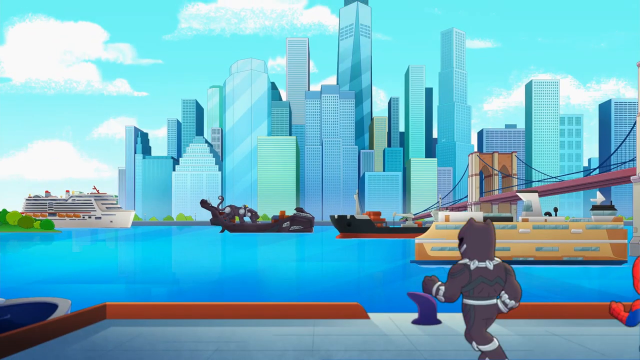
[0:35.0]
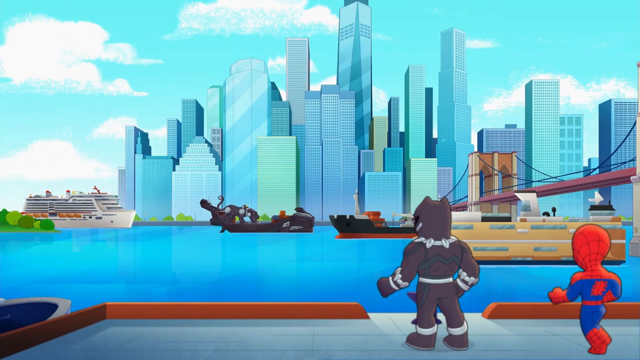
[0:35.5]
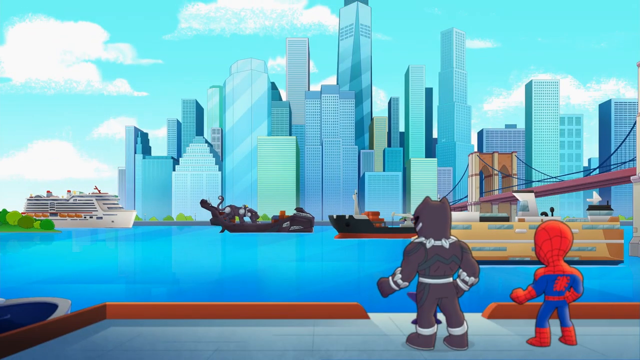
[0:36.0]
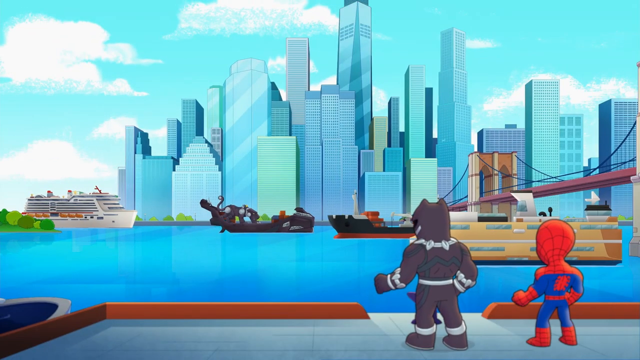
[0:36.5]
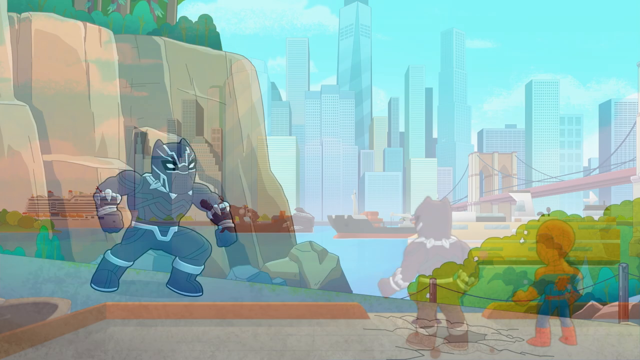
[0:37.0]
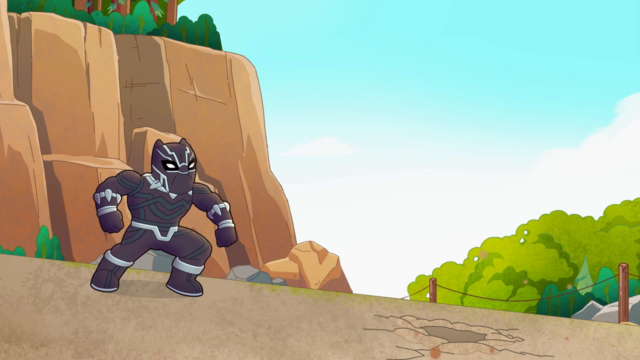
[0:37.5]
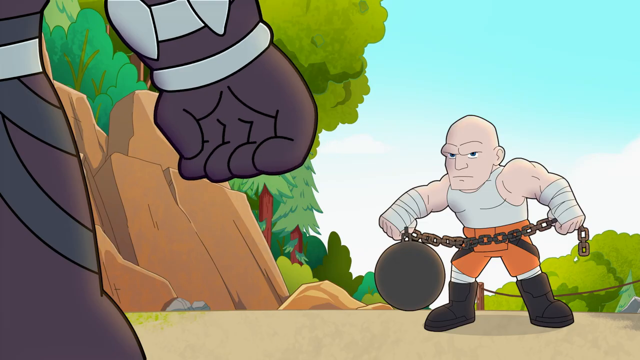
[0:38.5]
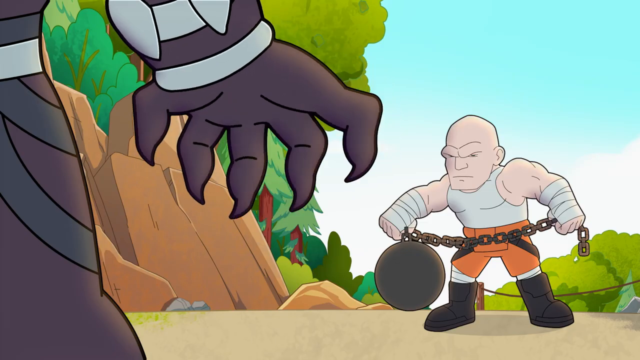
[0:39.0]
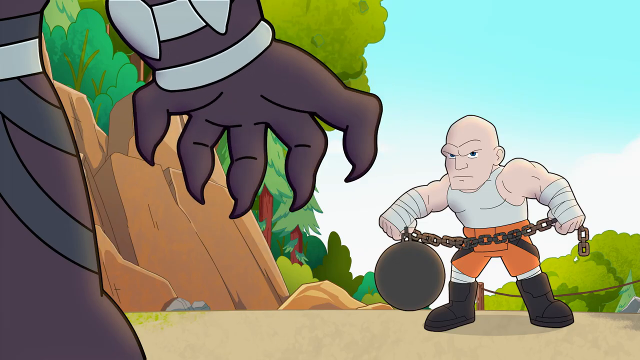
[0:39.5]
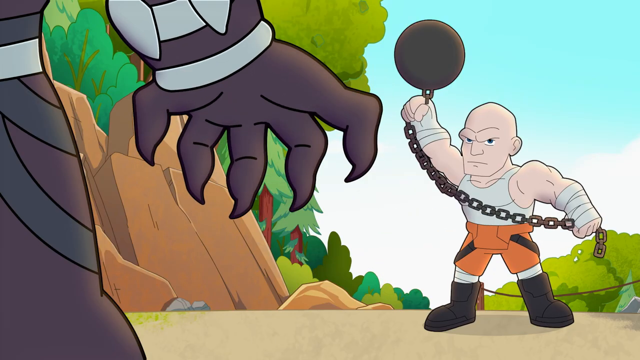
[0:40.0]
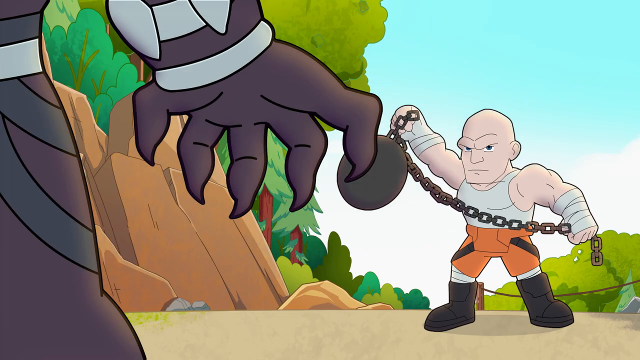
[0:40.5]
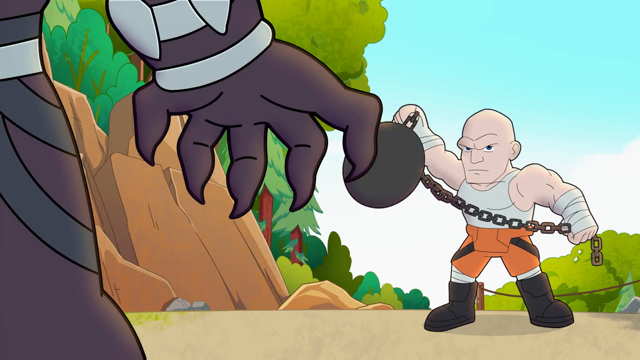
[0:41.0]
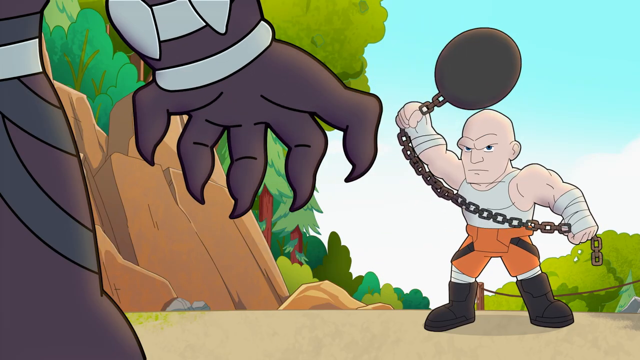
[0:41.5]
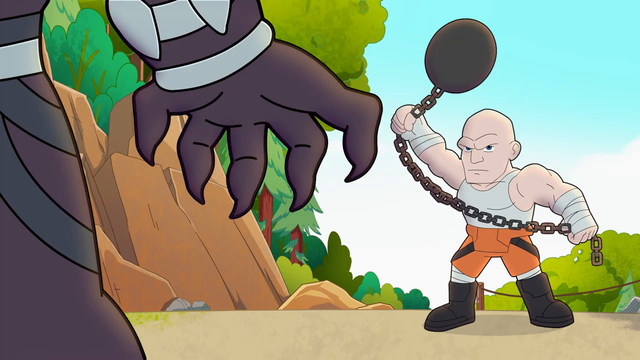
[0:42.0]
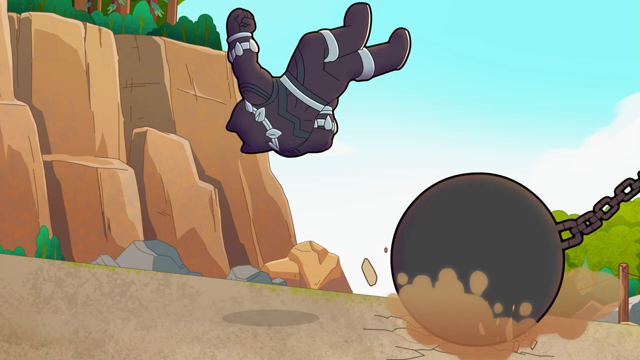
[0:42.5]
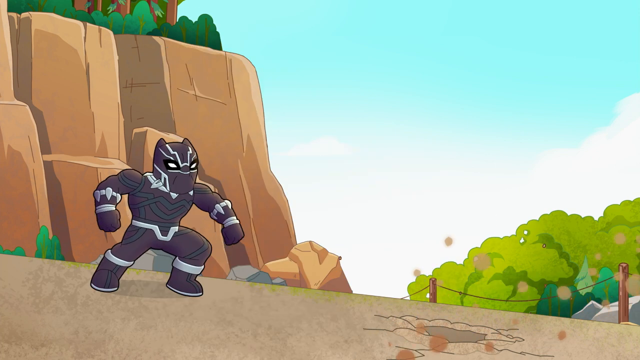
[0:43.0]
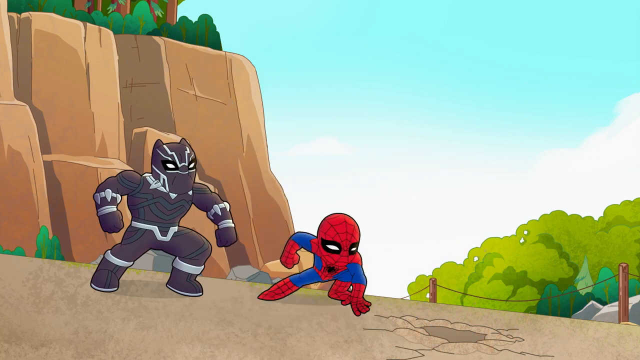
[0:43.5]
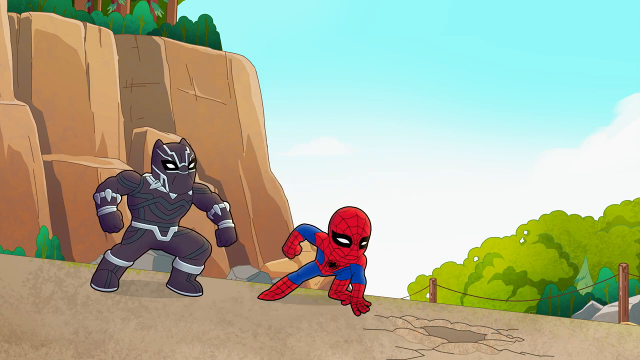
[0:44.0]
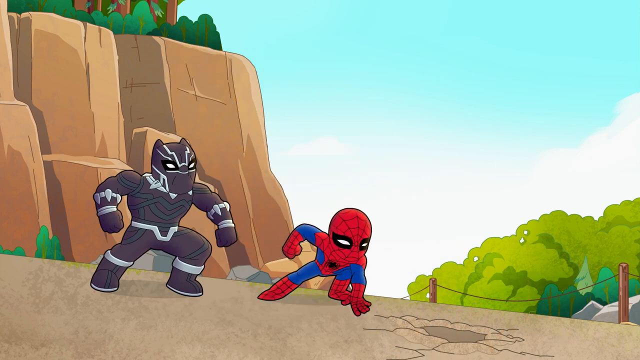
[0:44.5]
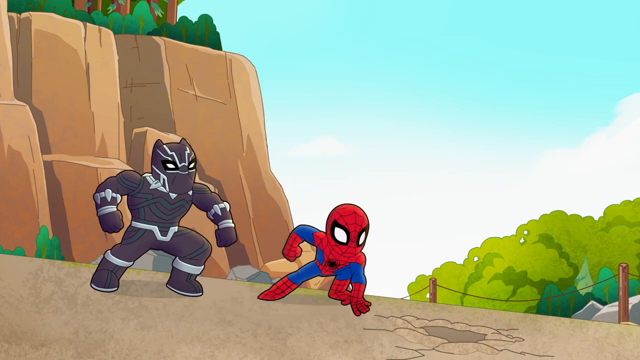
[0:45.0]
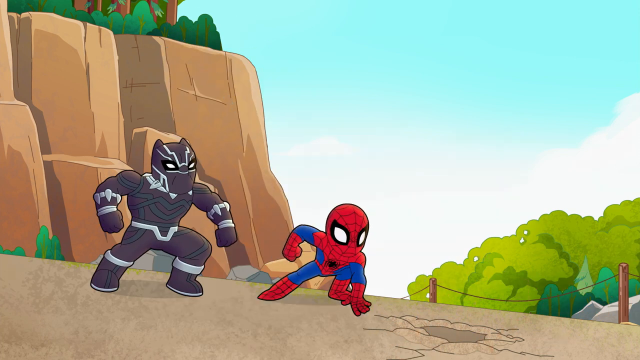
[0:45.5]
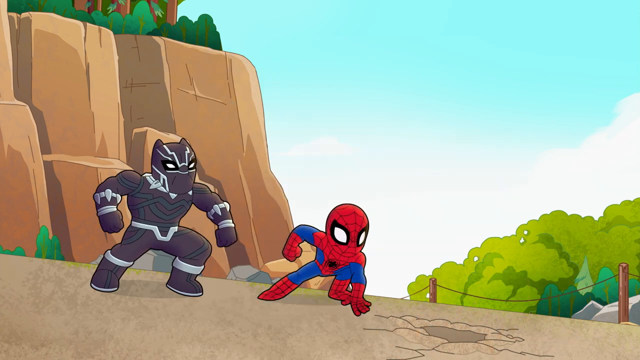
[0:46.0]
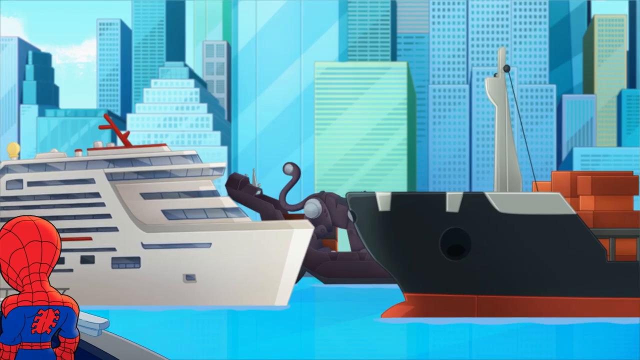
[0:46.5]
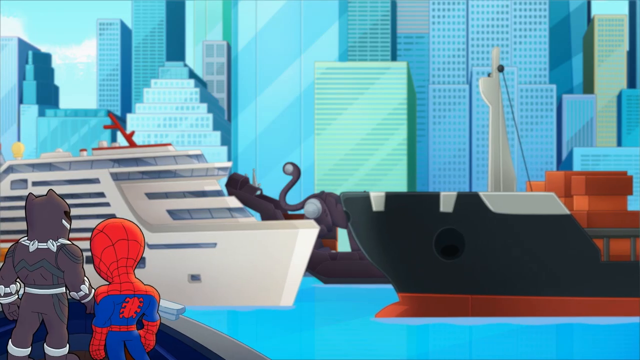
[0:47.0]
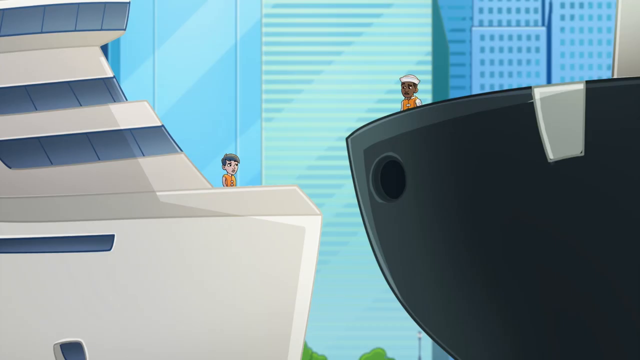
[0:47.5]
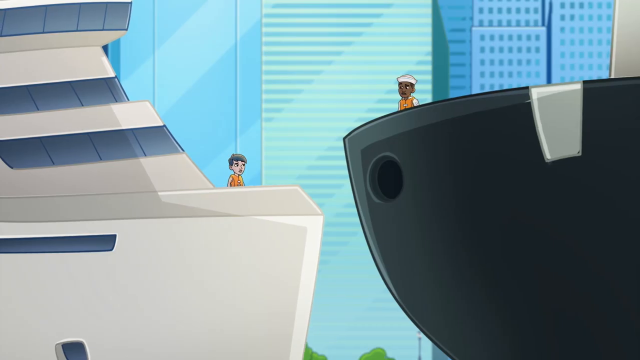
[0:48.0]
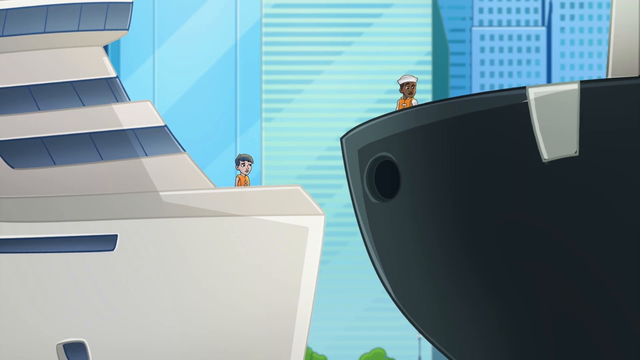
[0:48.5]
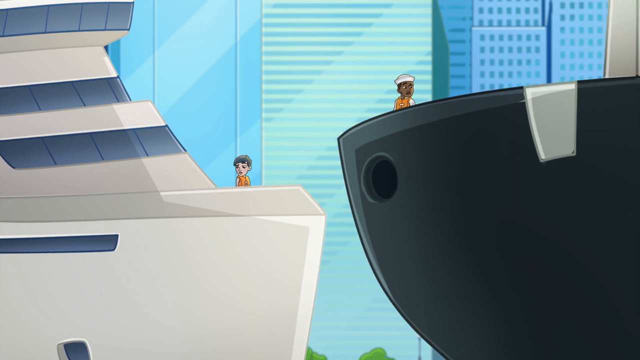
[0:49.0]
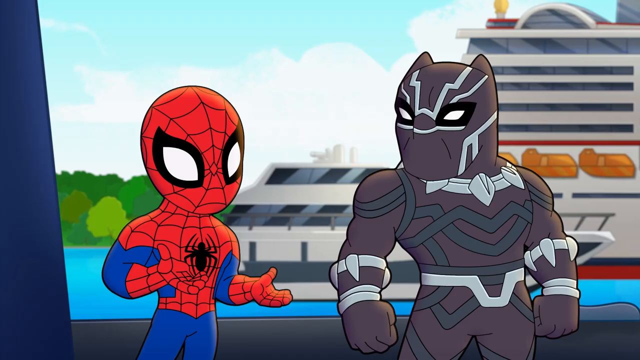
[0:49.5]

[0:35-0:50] The scenes shift somewhat erratically but keep the same two characters, Spidey and the maroon-clad guy. Both approach the dock and look out to the ships. The scene shifts to the maroon guy with a bald, humanish non-superhero man who swings a big ball and chain and threatens the maroon character. The shots shift back and forth very quickly. Spidey appears, and then both characters are on boats, seemingly floating on the river in various places, with perspectives jumping from place to place. The maroon-clad figure looks a little bit like a cat and has claws. The two go up against the muscular bald man with the ball and chain, and they are in a boat floating toward two boats that appear to be about to crash.